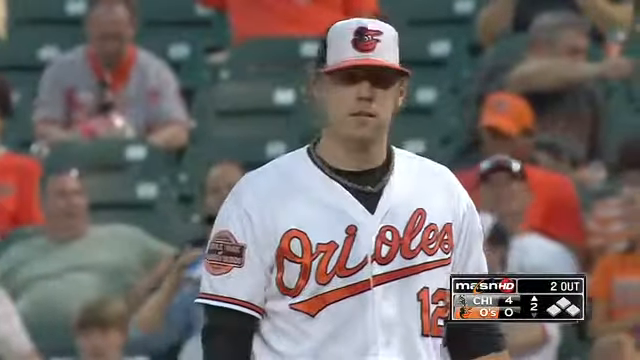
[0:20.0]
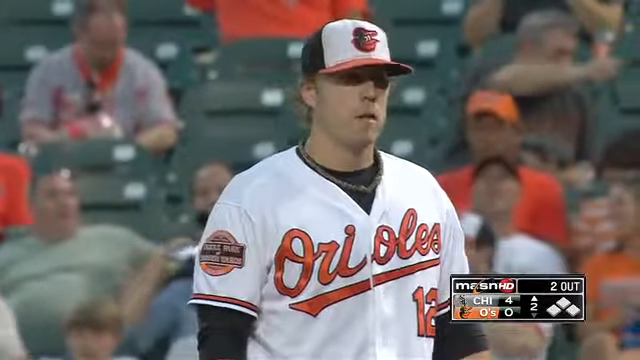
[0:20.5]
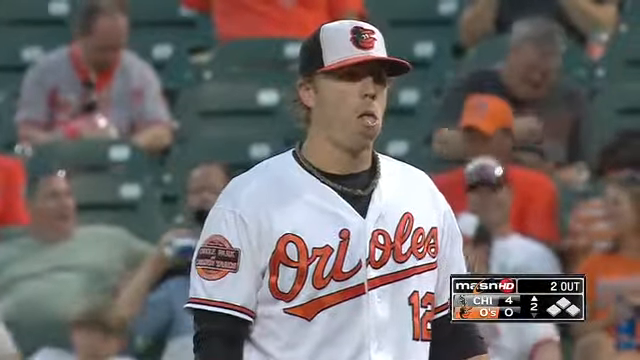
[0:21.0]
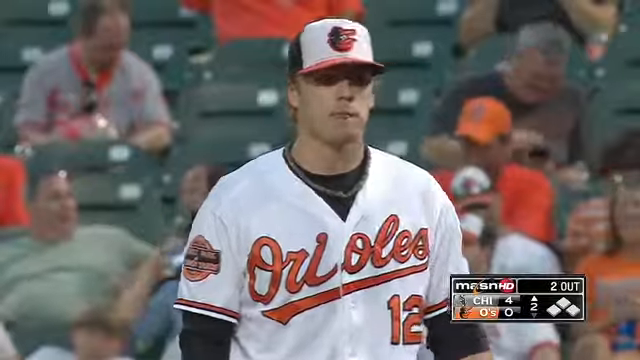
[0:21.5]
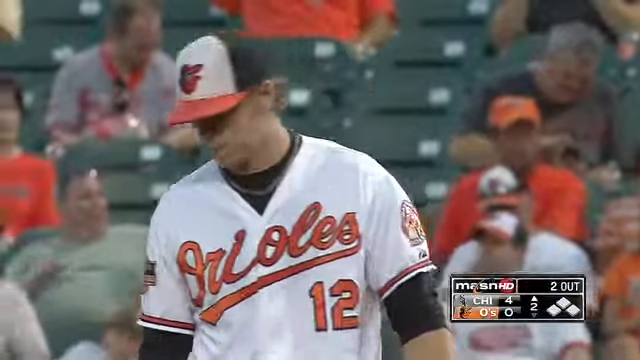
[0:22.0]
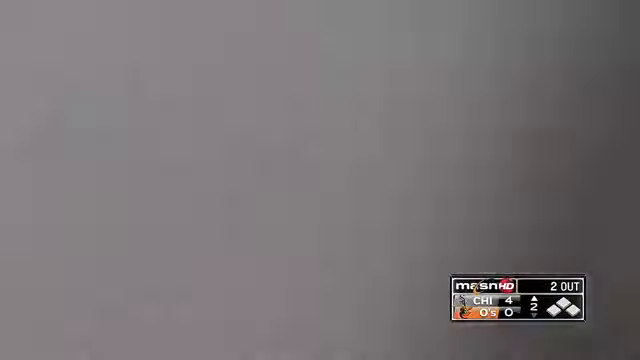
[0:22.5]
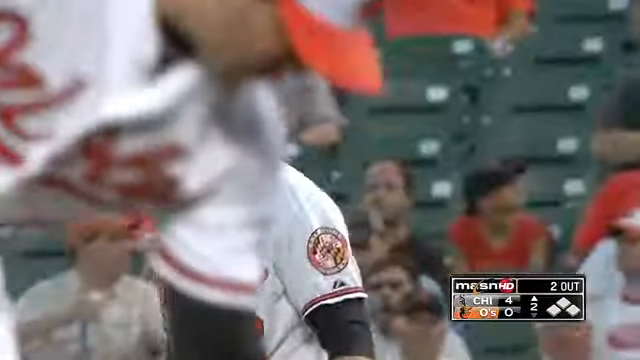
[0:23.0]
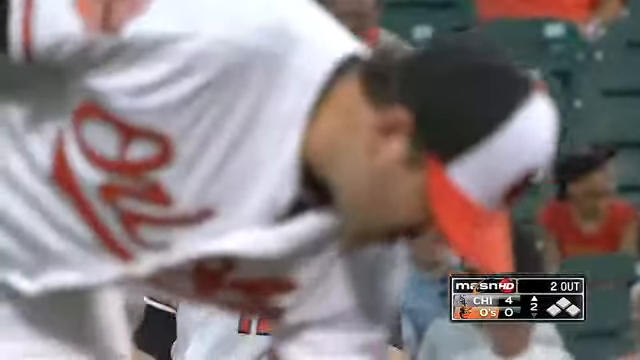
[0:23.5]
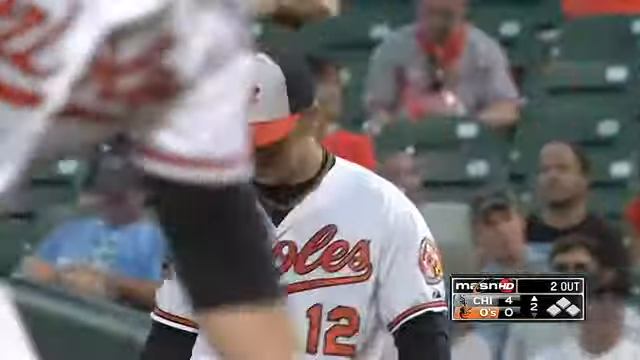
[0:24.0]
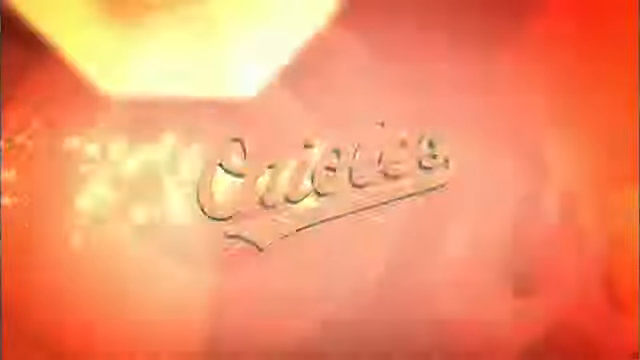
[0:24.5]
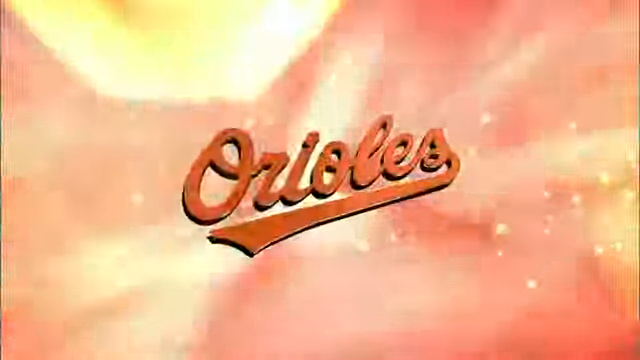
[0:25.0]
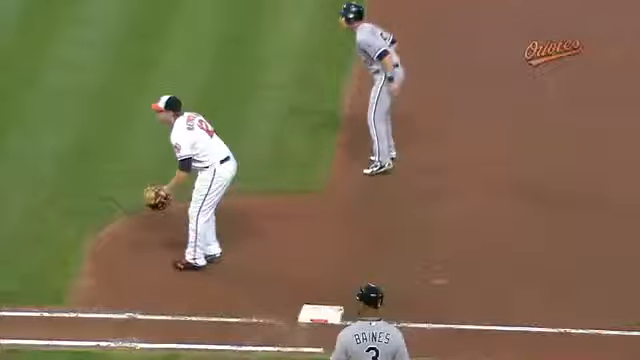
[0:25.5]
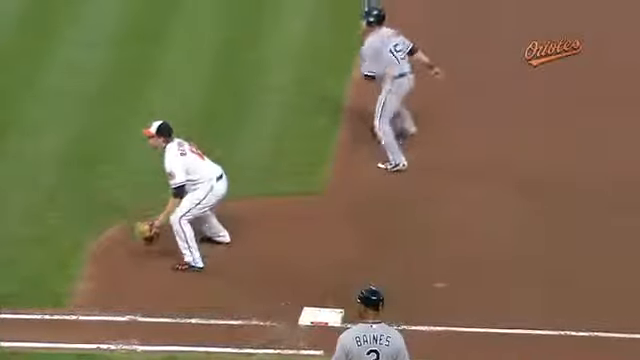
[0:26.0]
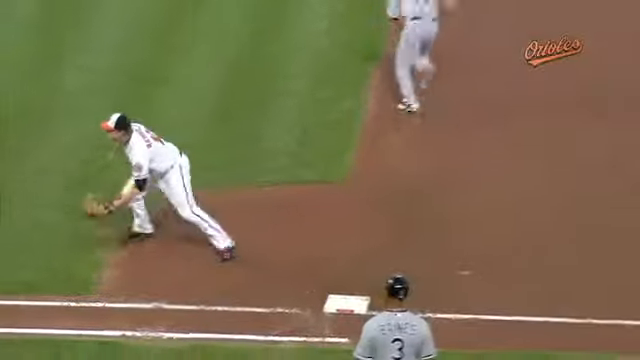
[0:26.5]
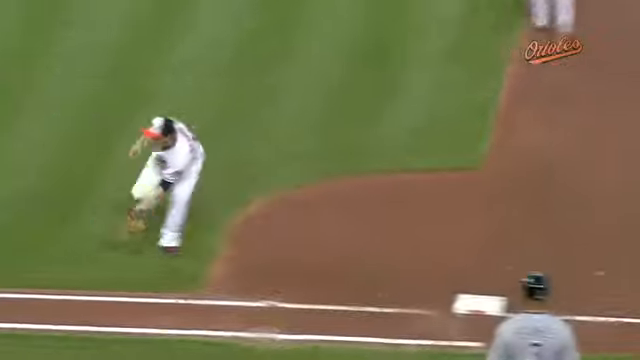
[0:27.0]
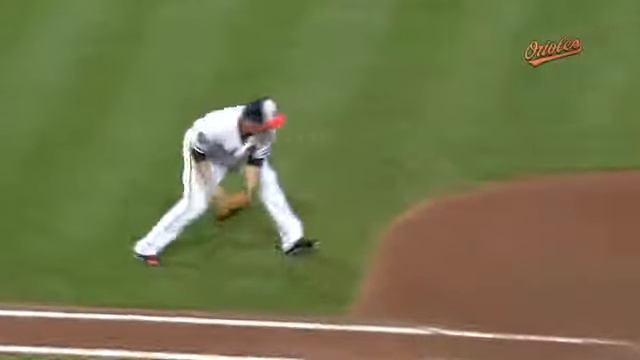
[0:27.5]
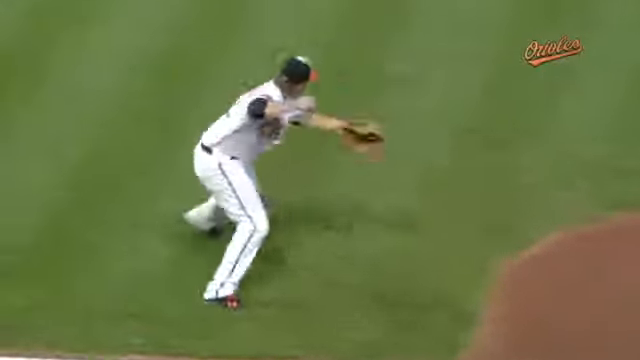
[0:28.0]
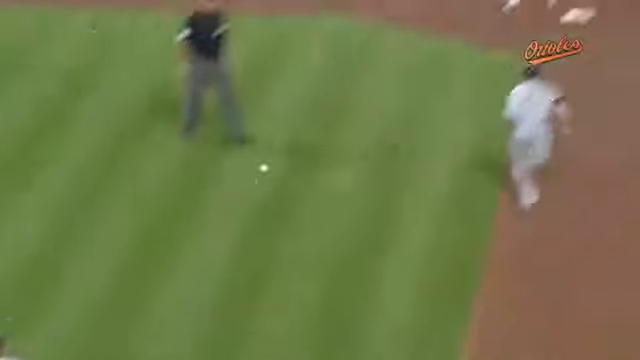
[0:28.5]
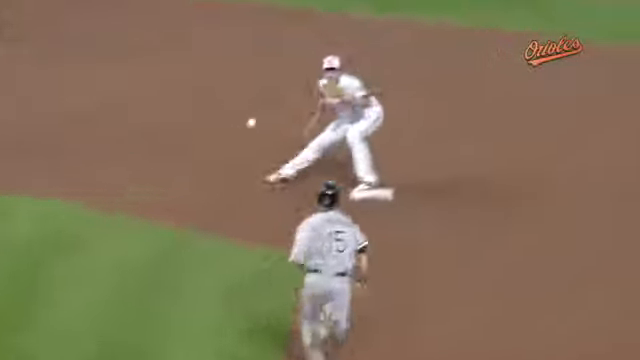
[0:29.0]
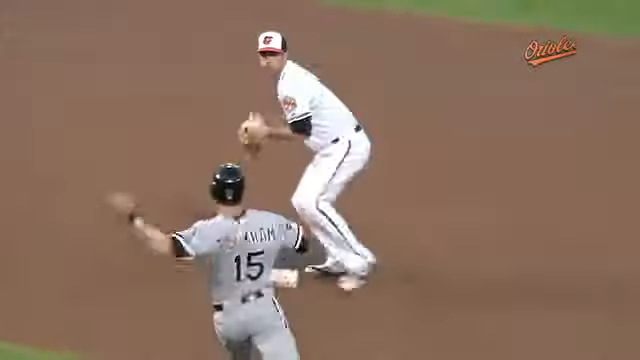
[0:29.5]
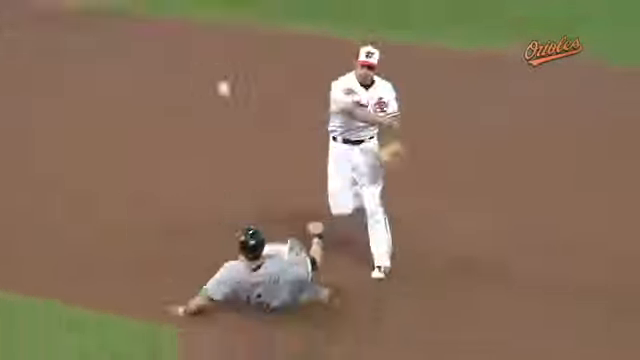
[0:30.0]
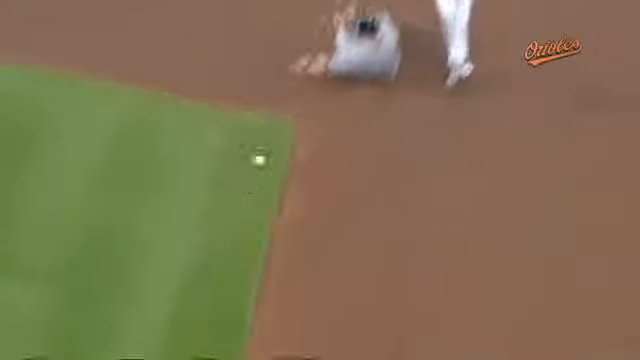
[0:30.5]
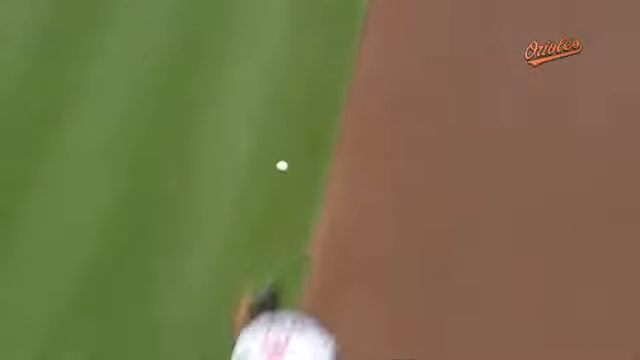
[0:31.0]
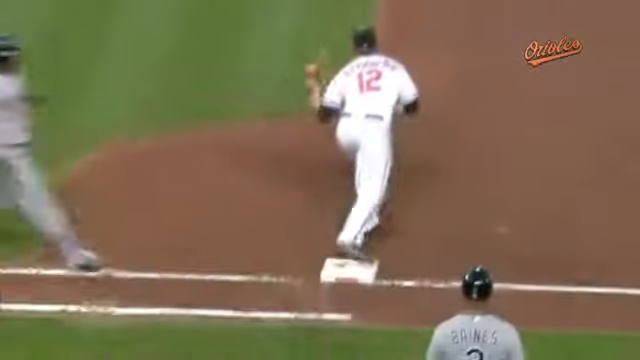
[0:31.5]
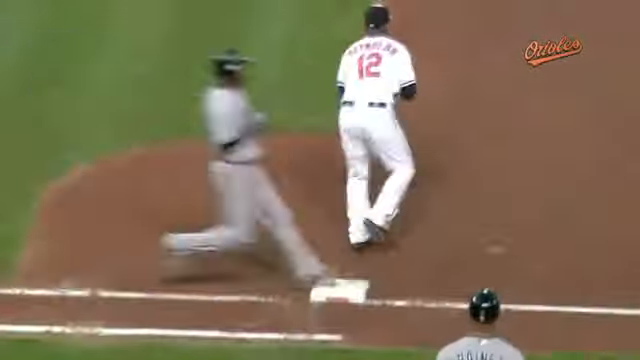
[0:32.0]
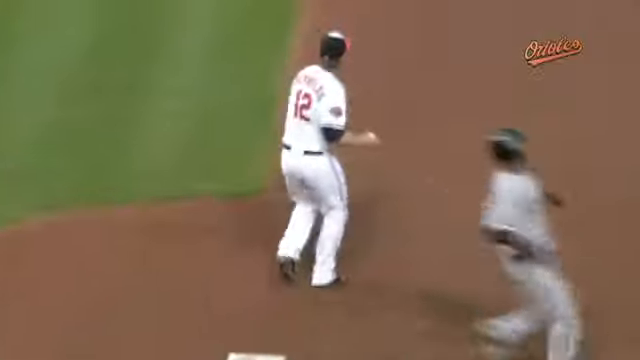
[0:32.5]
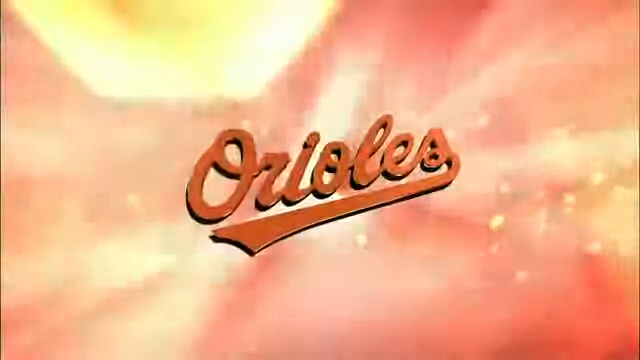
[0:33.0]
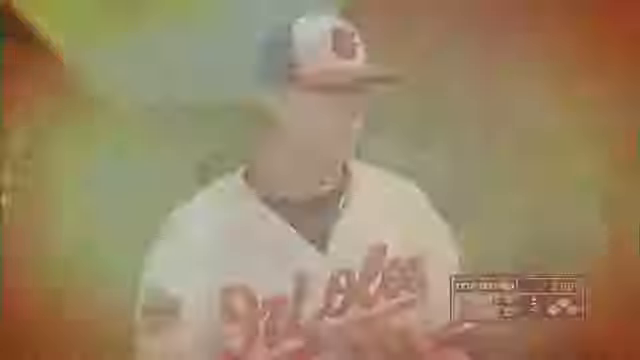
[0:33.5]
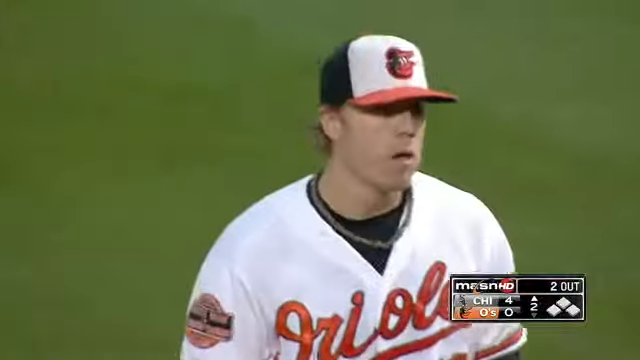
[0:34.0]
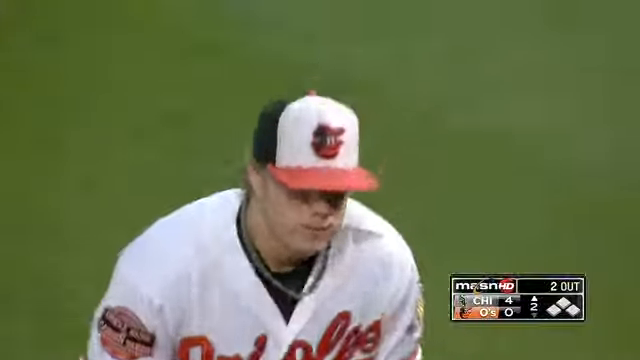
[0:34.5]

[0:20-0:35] At a baseball match, the video shows a team member on the field wearing a black and white cap and a white shirt with the text "Aureoles" in orange. He is number 12, is perhaps six feet tall, and has short brown hair. The video then shows a replay of an incident in the match: the individual on first base catches the ball and immediately throws it to the individual on second base, who also catches it. The individual on second base then throws the ball back to the individual on first base, who catches it before the runner gets to first base.